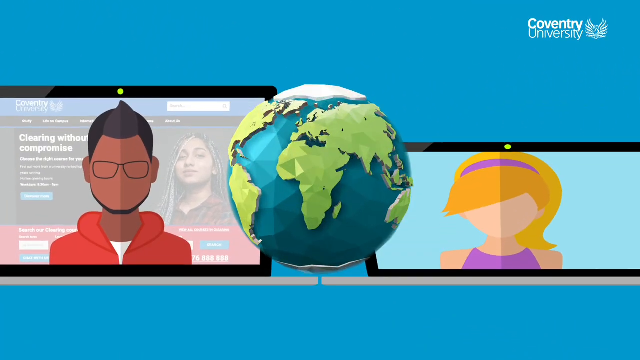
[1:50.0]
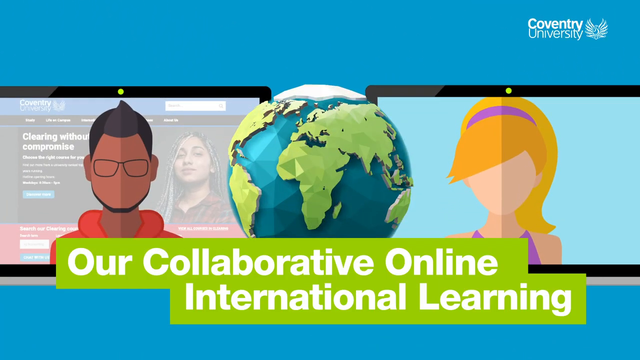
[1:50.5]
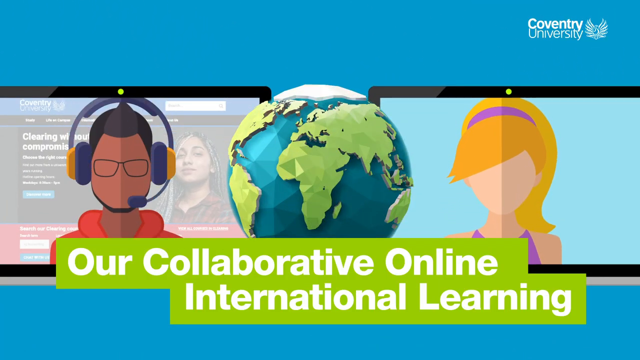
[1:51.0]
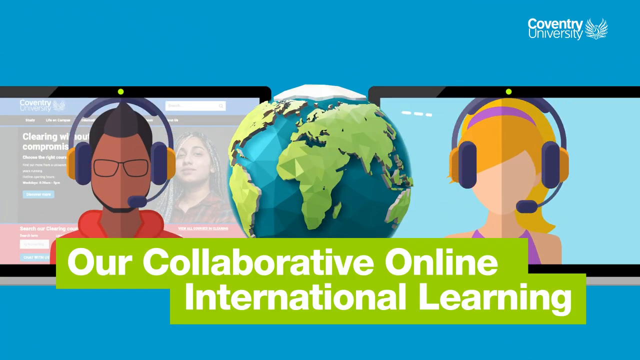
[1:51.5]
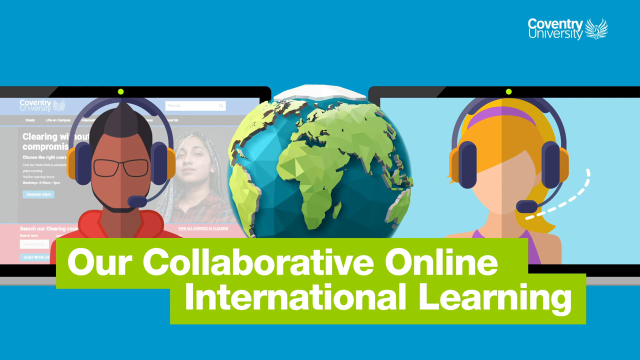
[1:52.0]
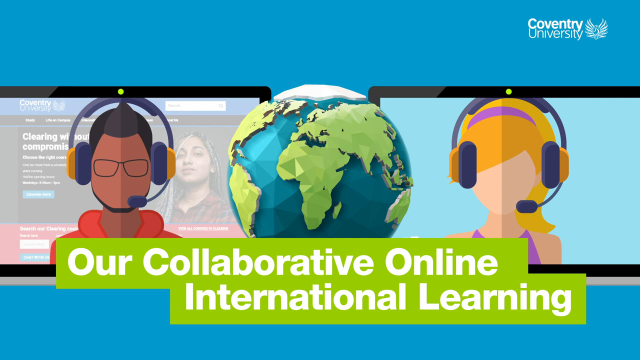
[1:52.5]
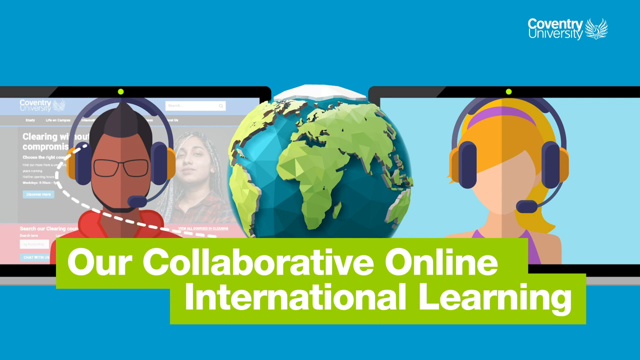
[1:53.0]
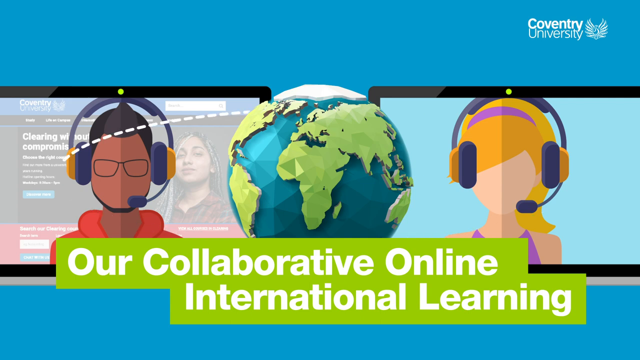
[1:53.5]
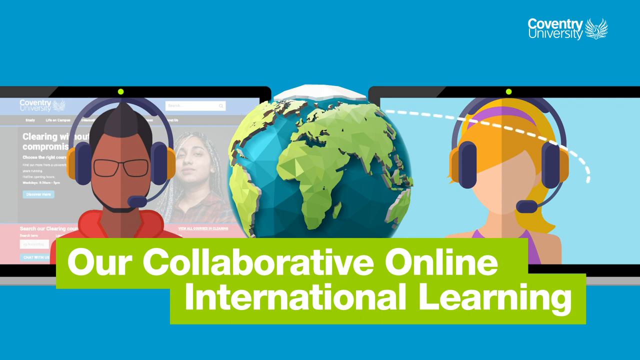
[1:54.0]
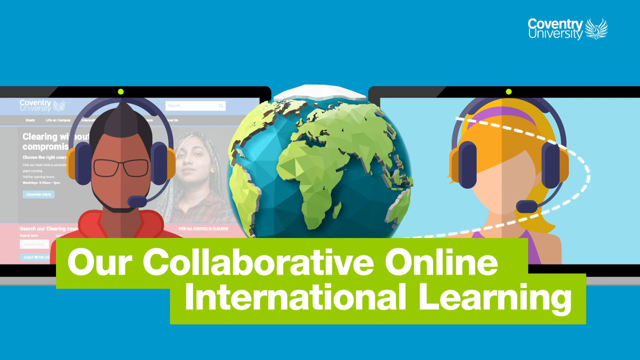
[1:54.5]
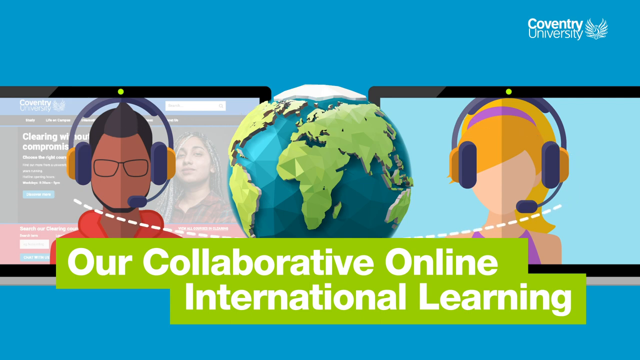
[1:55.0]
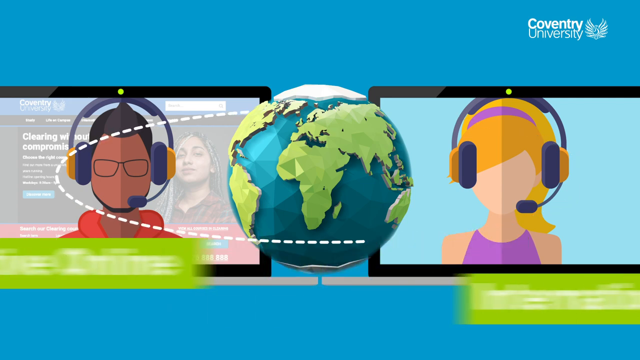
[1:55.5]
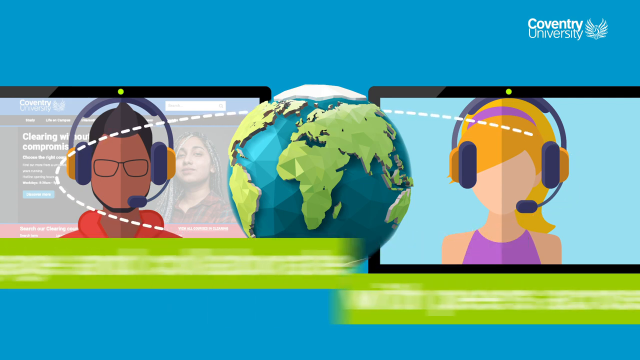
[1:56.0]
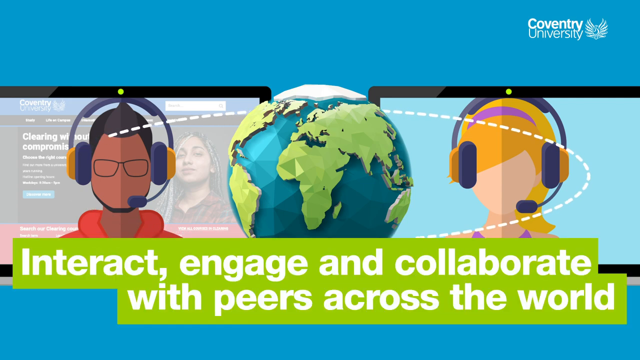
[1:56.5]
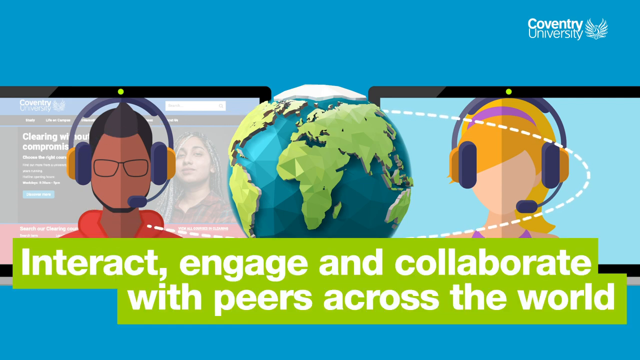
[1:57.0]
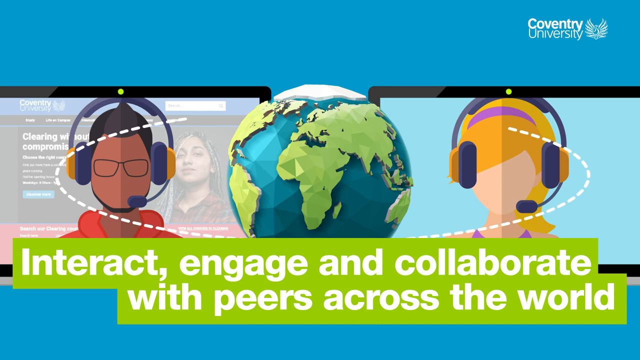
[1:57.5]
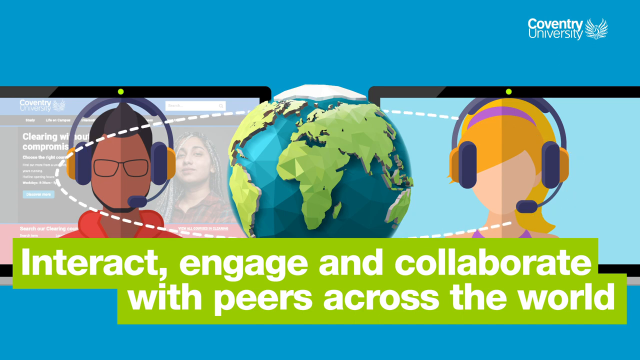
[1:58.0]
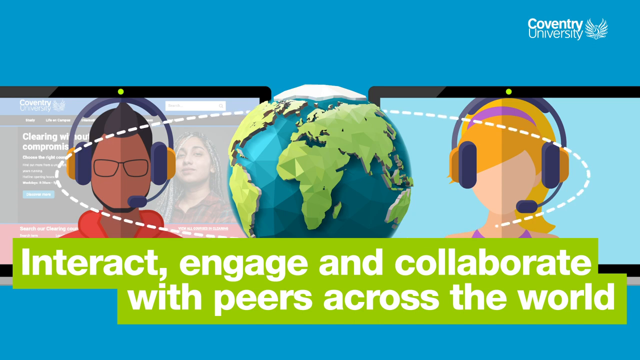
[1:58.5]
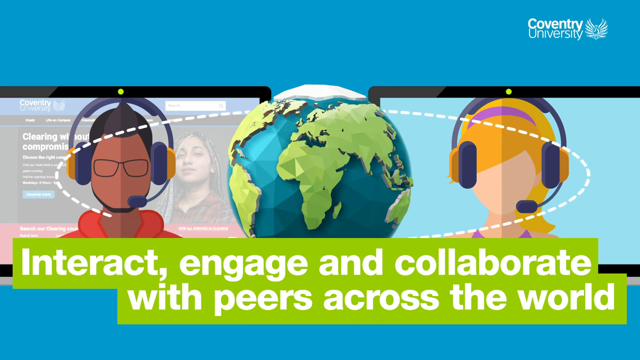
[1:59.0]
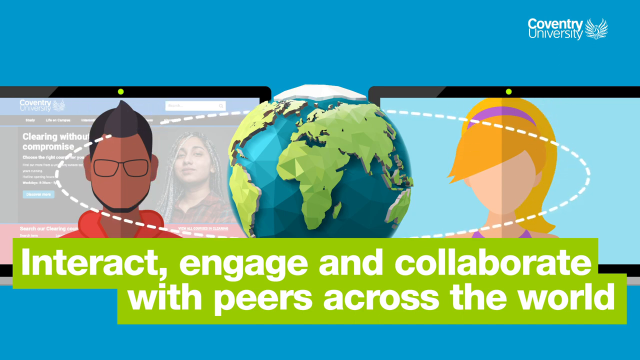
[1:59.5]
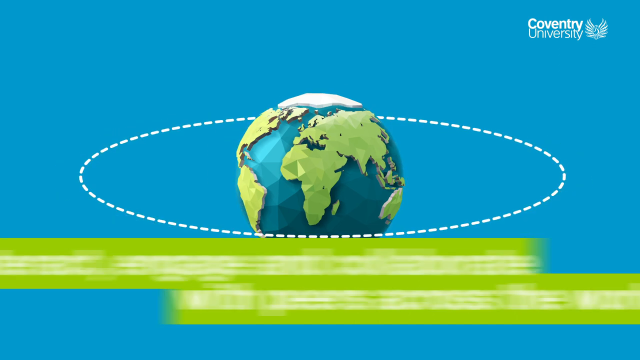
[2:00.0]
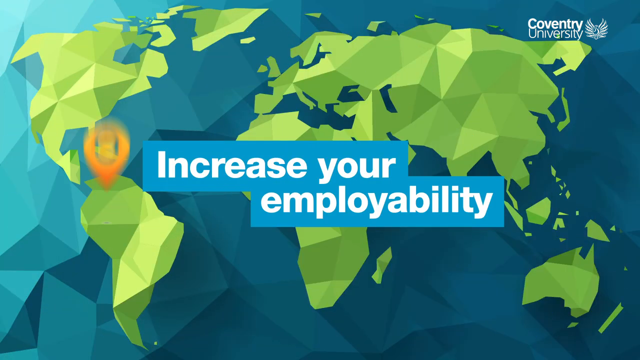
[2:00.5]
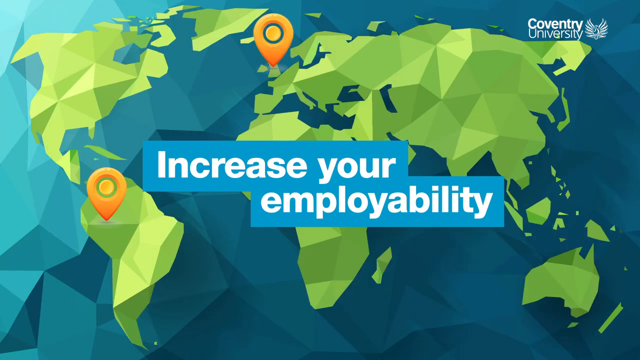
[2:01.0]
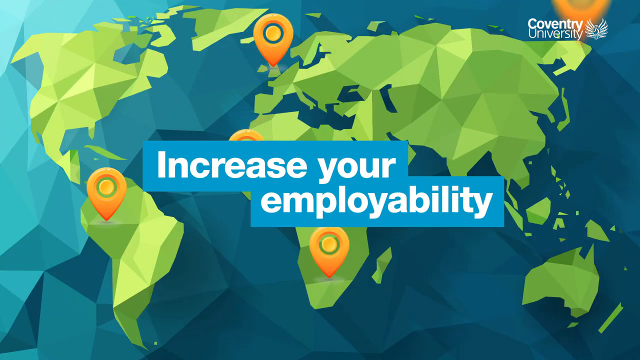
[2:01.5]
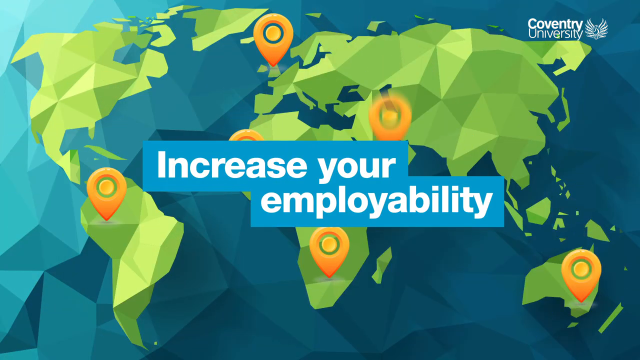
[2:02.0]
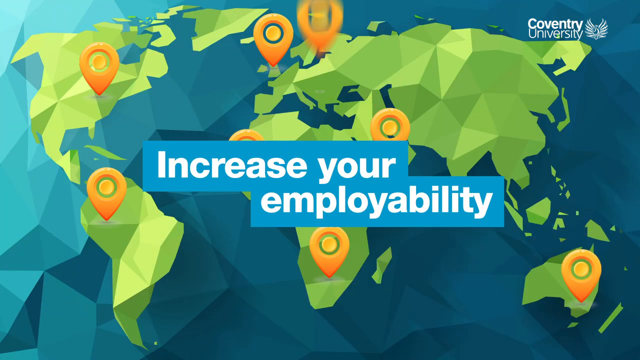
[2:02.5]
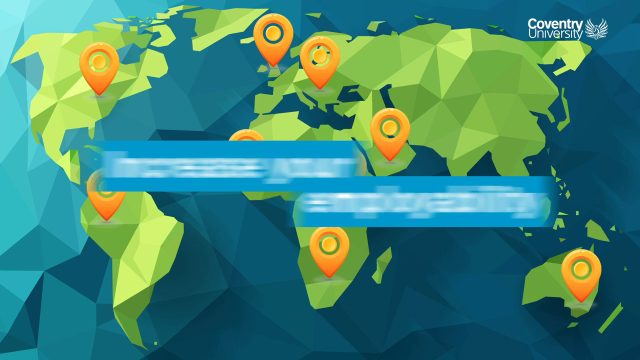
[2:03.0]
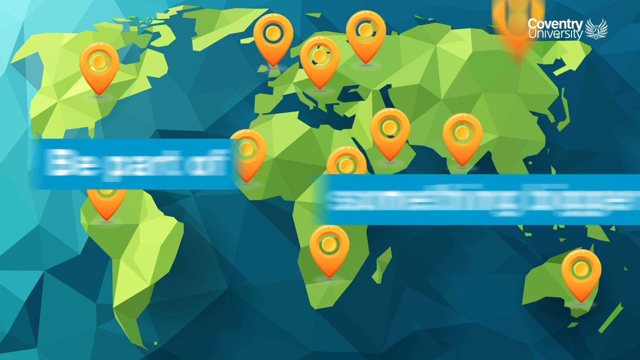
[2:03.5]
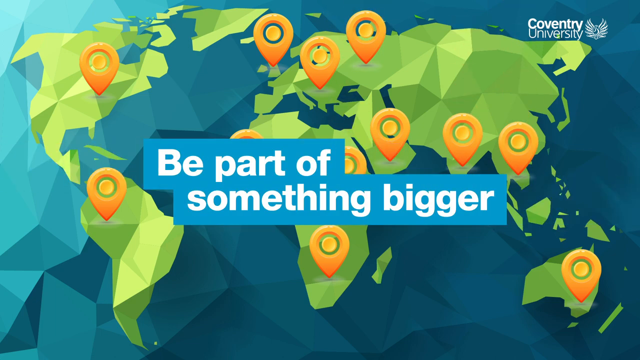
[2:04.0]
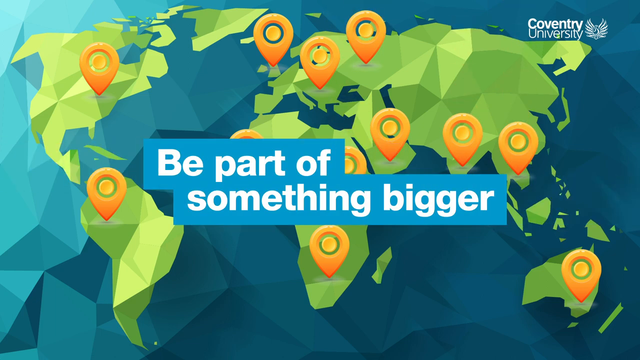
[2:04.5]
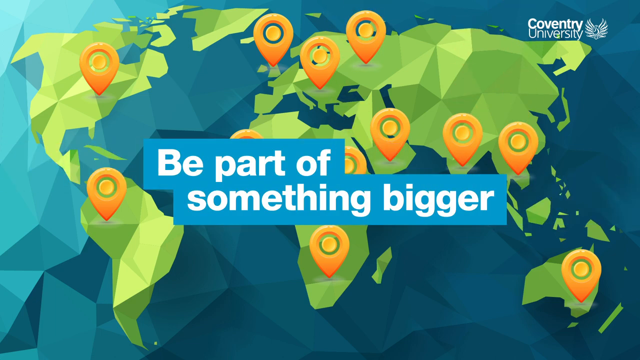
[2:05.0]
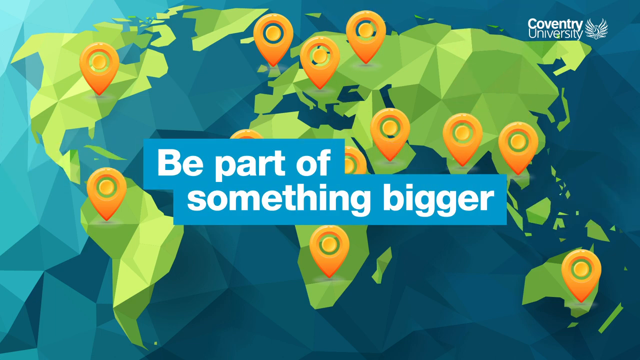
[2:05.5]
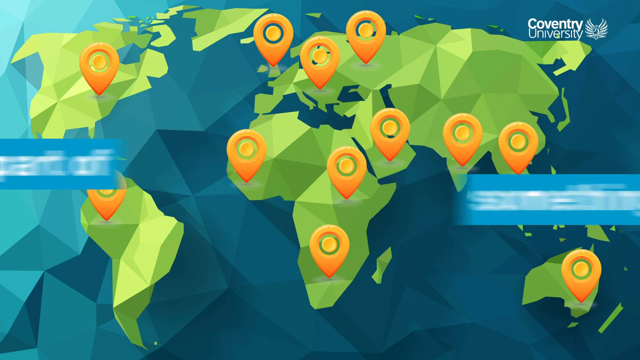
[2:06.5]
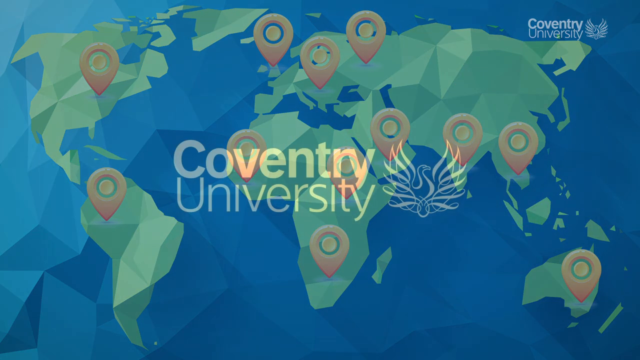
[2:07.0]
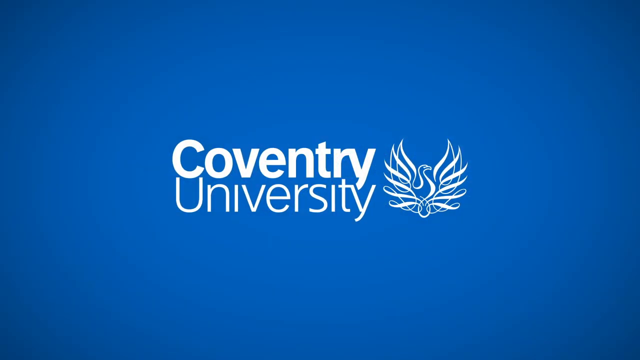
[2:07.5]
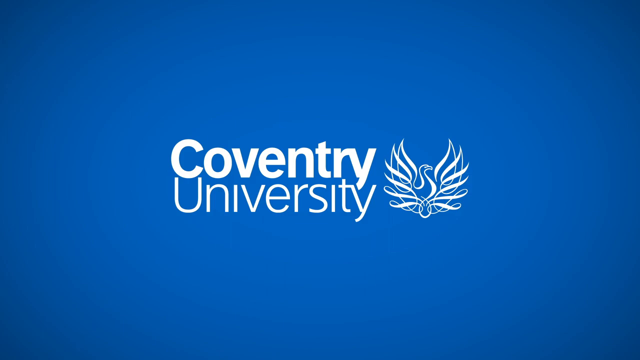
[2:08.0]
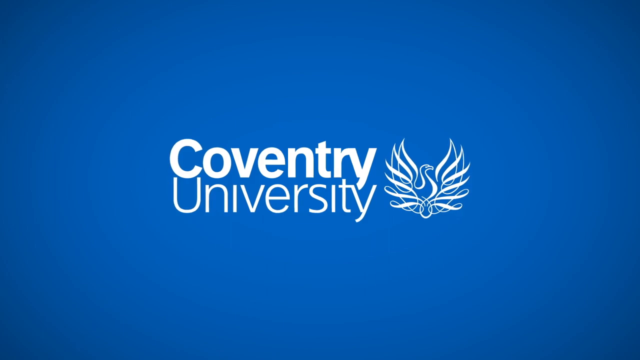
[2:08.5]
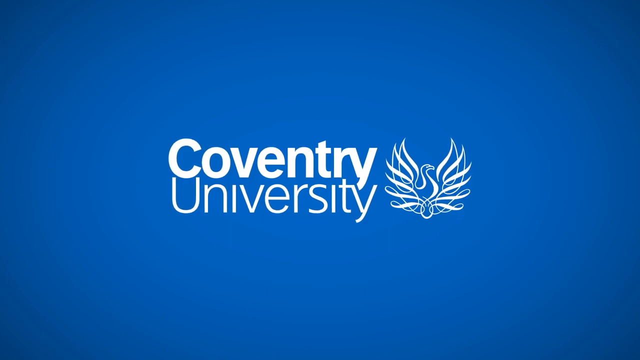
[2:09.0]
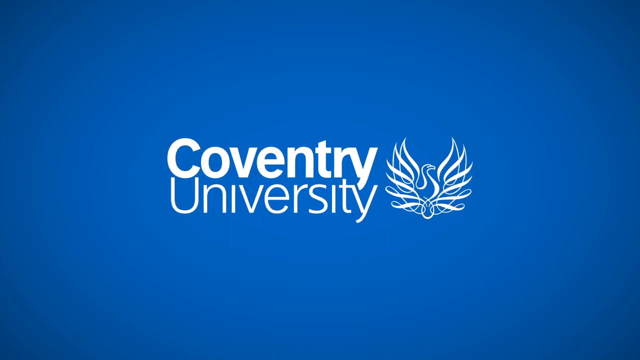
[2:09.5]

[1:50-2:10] A blue screen shows "Coventry University" in white lettering in the top right corner. On the left-hand side, a gentleman in an orange sweater and black glasses is looking at a computer screen. On the right-hand side is a young lady with blonde hair and a purple headband. In the middle of the screen is the blue globe with green continents. Both people seem to be wearing headphones with microphones. At the bottom of the screen, bold white lettering on a green background reads "Collaborative online international learning." Slowly, a ring appears around the globe, going along it. The next bold white lettering reads "Interact, engage, and collaborate with peers across the world." Then another blue screen appears, with the continents in green and small orange dots landing on each continent. White lettering on a blue background reads "Increase your employability. Be part of something bigger." The last screen reads "Coventry University" in white lettering on a blue background.